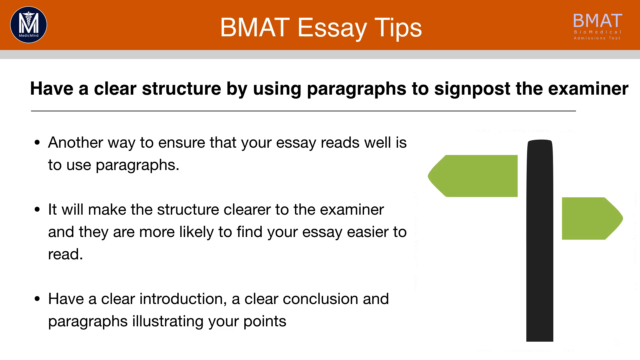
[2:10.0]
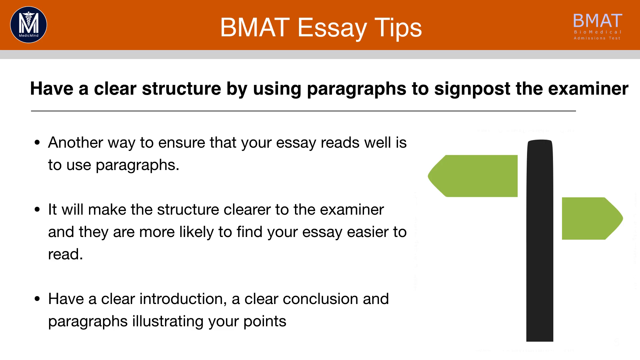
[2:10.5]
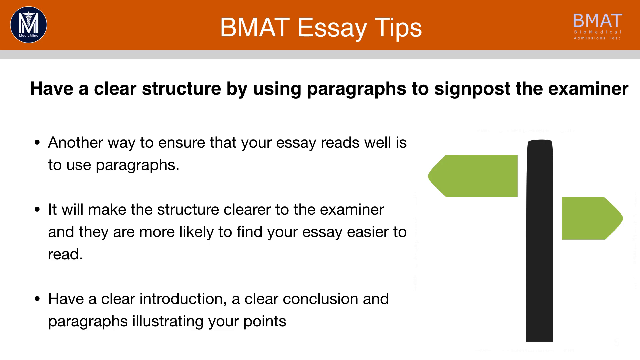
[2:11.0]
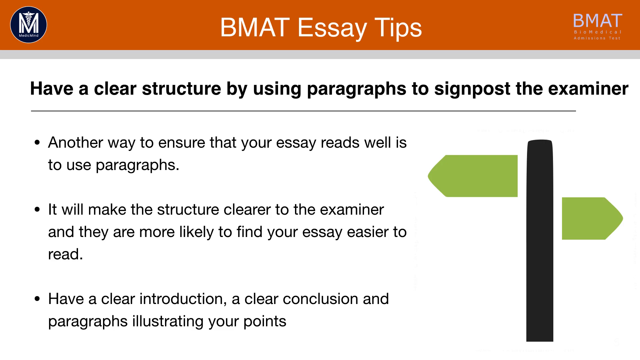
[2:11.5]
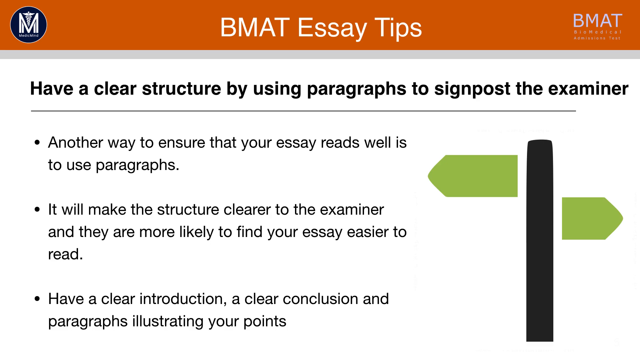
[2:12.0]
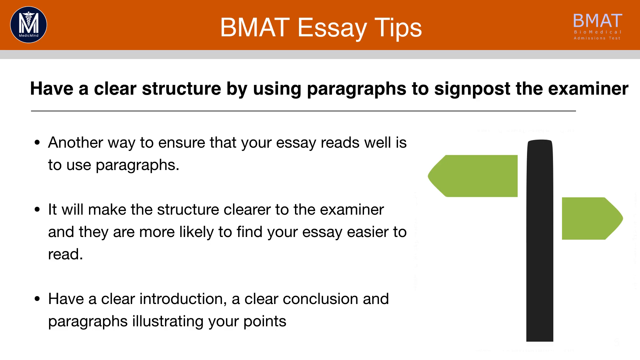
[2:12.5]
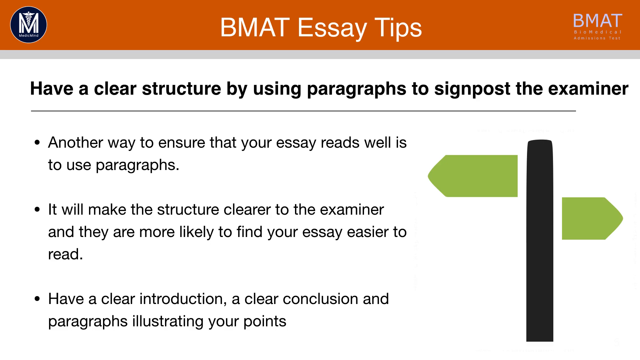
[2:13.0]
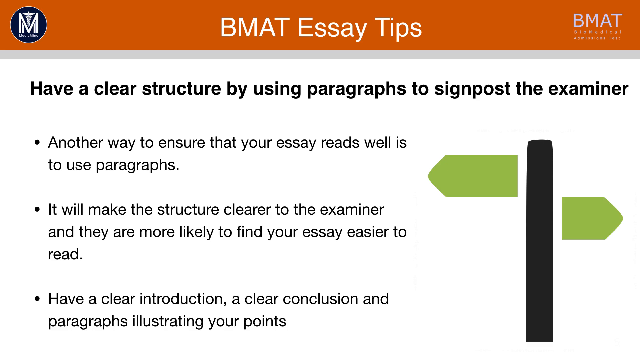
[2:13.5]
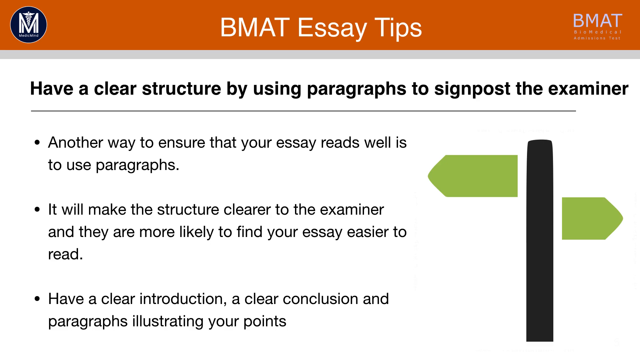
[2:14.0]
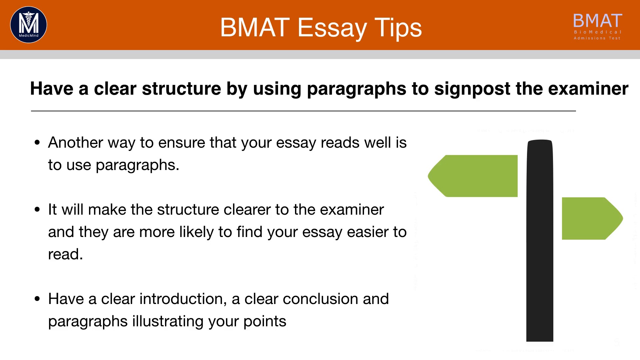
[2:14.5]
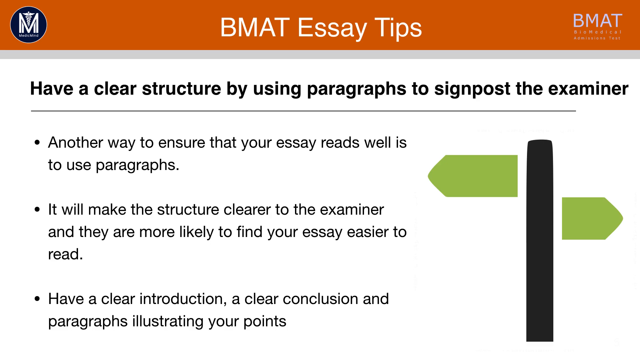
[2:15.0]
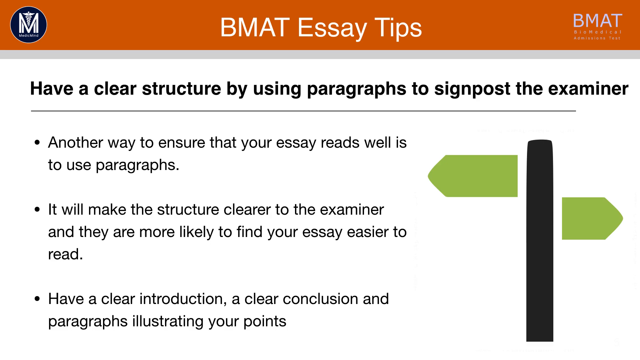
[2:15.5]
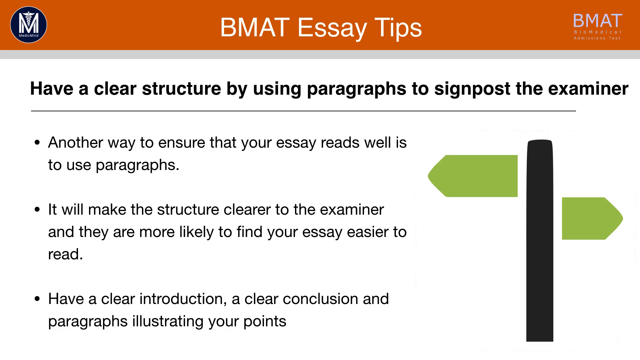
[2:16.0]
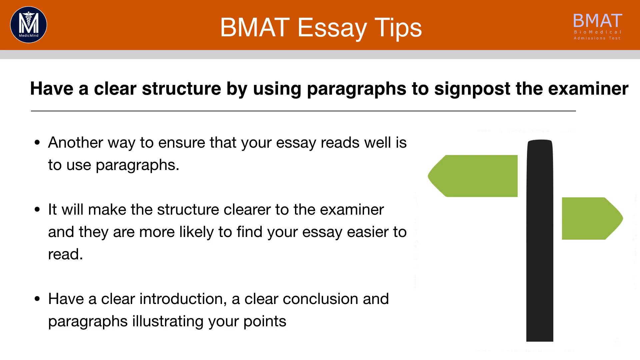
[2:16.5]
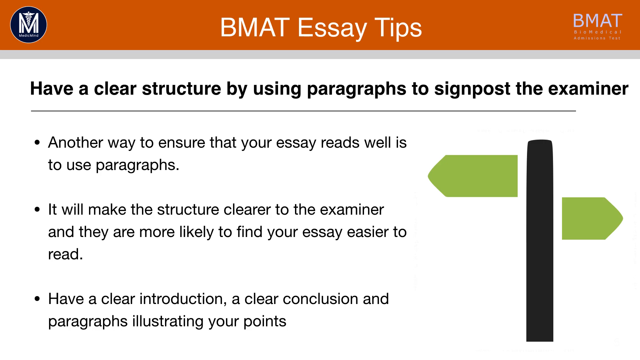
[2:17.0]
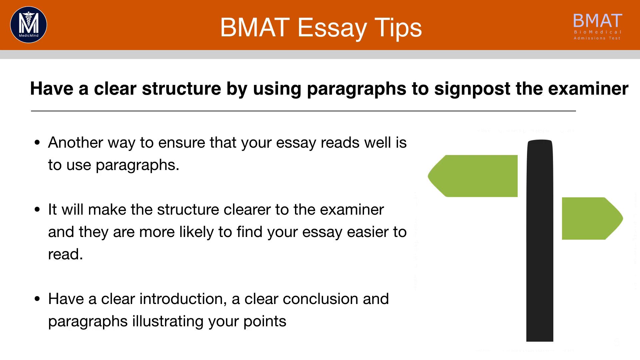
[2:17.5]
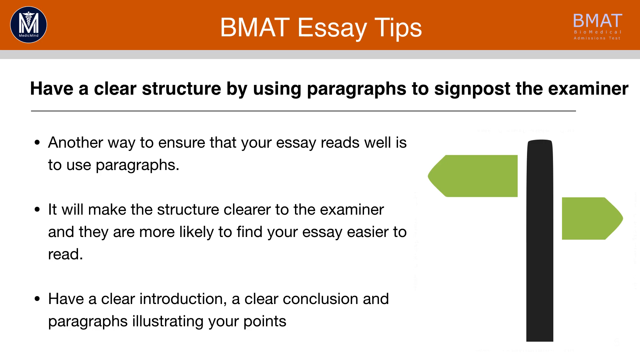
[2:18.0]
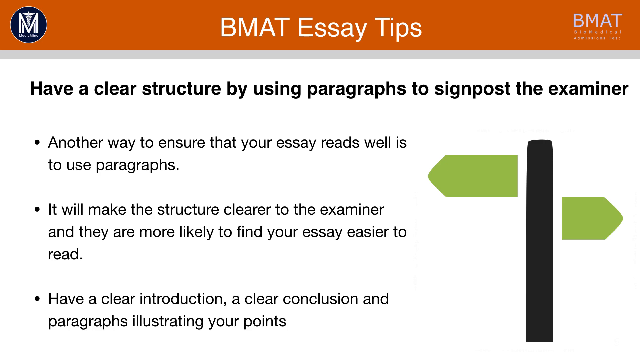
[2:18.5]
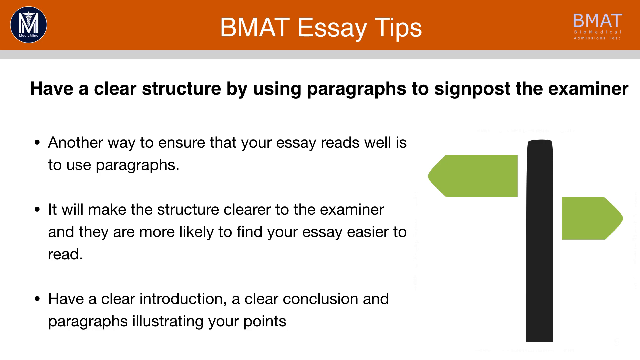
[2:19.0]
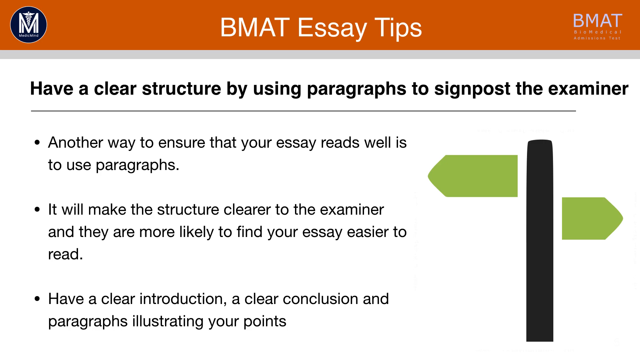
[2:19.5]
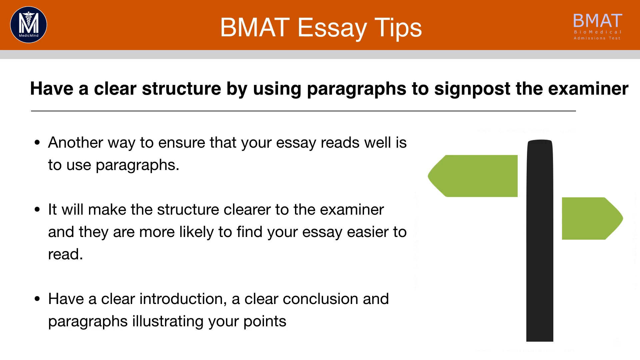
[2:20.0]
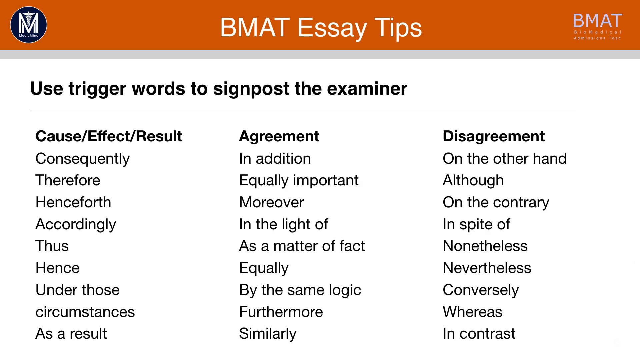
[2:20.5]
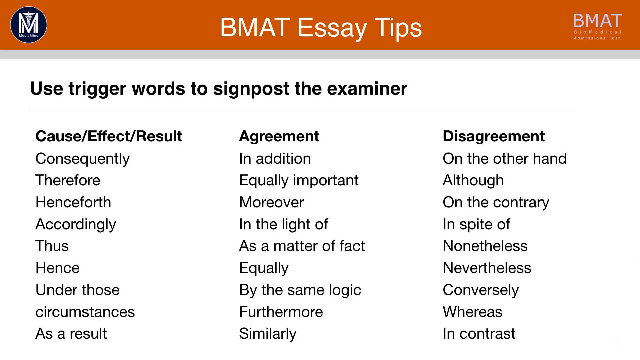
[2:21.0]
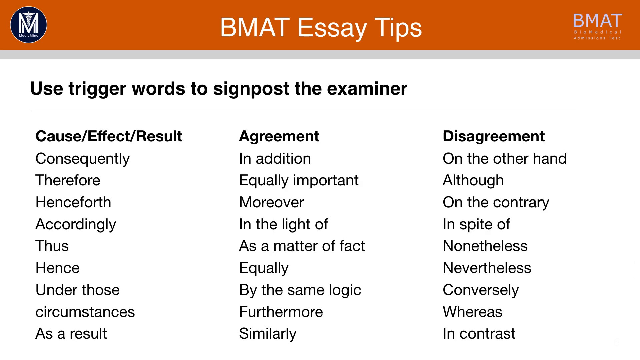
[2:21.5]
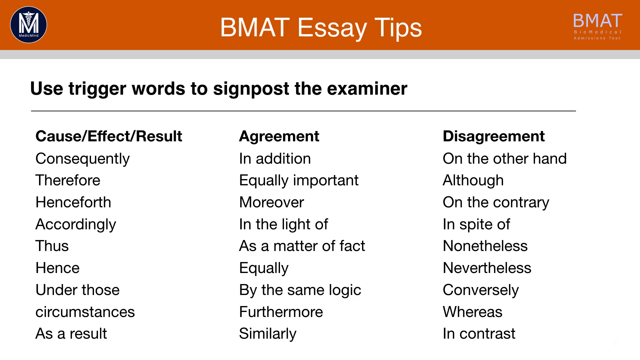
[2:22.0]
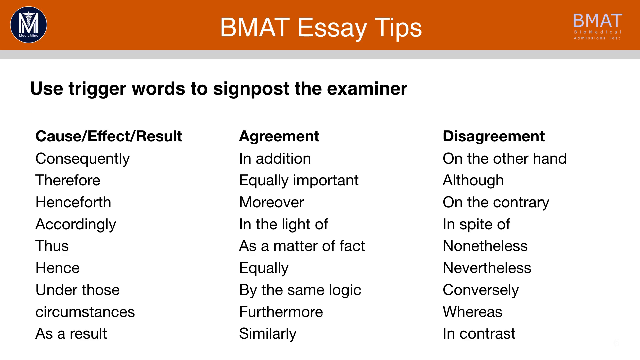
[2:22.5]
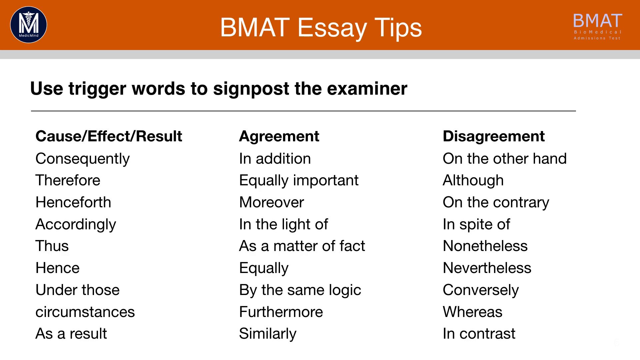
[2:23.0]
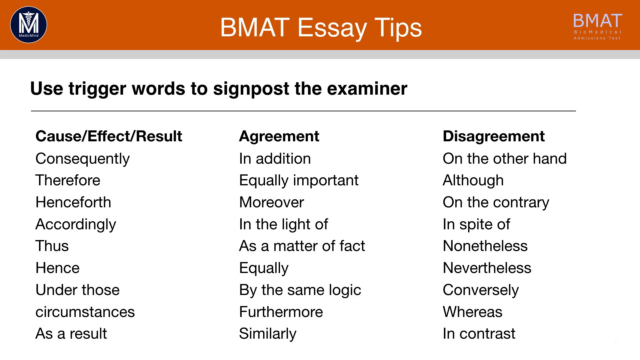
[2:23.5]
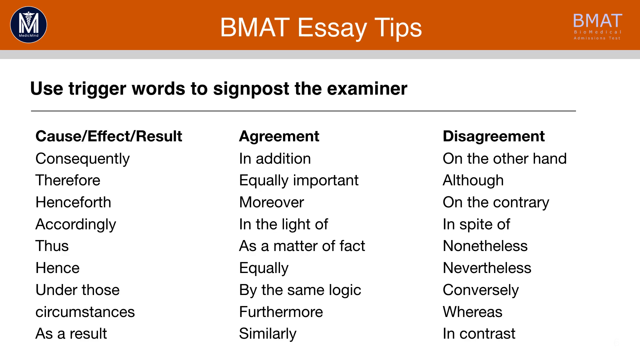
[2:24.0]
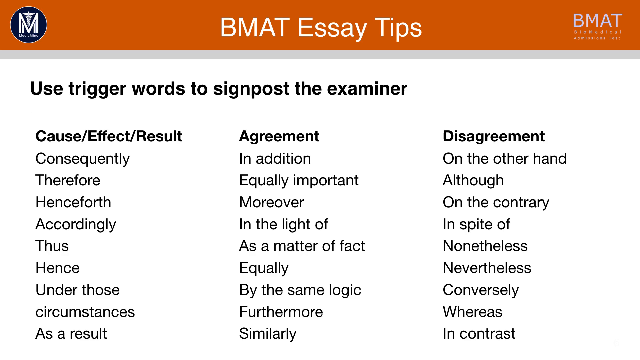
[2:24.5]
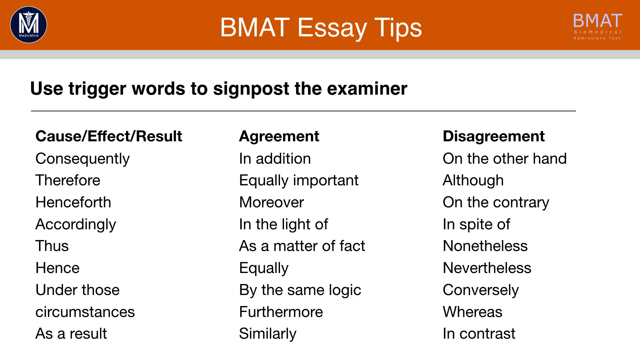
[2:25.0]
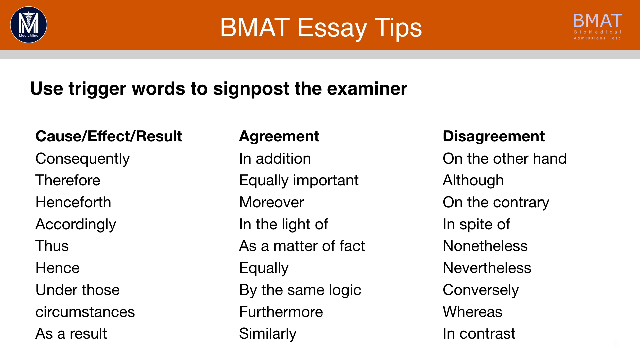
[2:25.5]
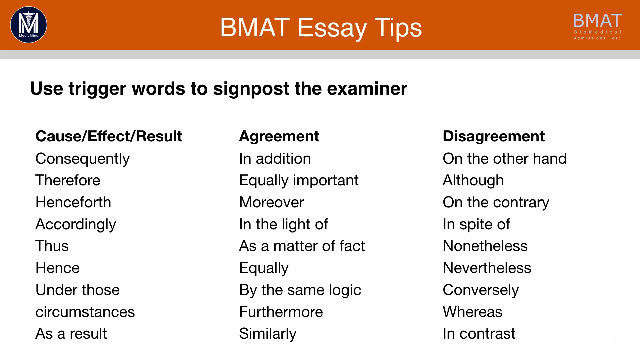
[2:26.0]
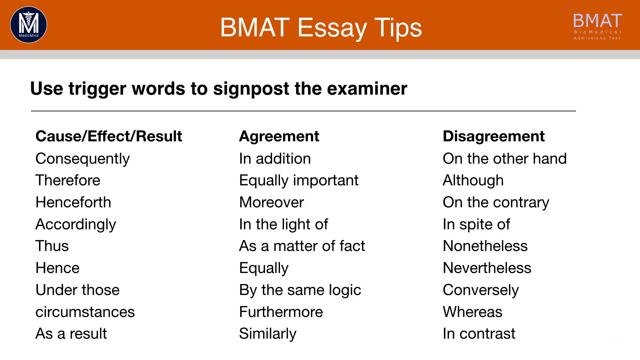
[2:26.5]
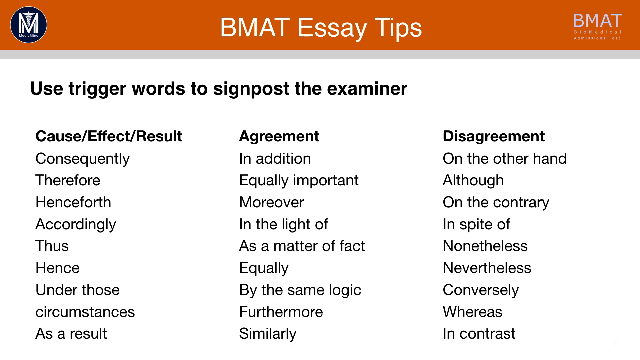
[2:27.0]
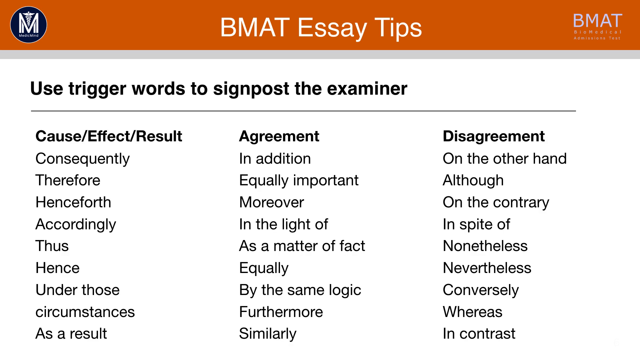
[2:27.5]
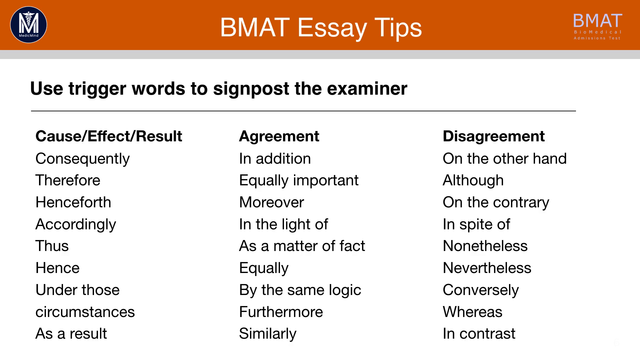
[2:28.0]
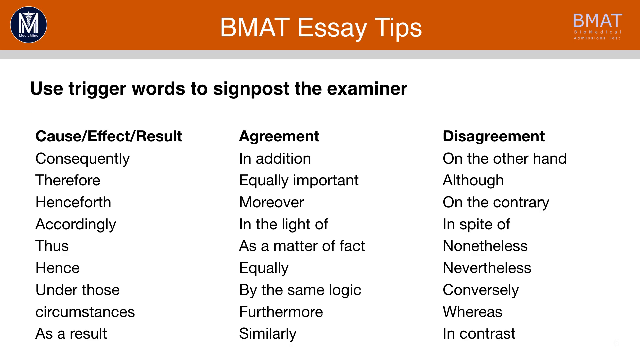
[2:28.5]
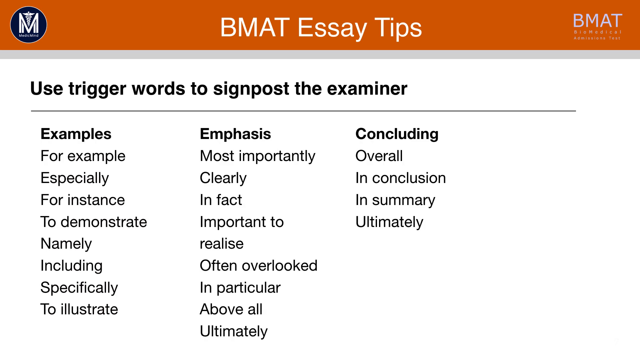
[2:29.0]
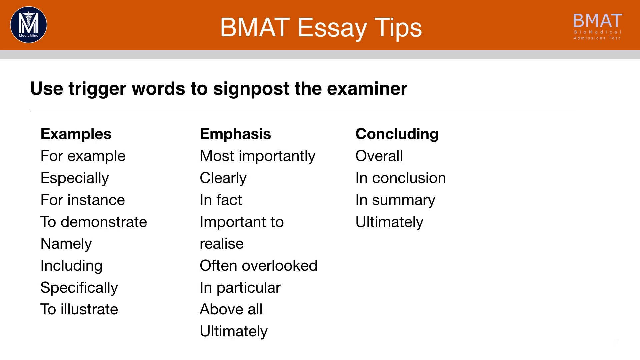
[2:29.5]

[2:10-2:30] The page shows the orange overlay, the white and blue logo at the top left, the BMAT logo at the top right, and black text reading "have a clear structure by using paragraphs to signpost examiner", with three bullet points of information and the signpost logo with the large rectangle and two green shapes pointing off it. It then transitions to a new slide, again with the orange overlay at the top and the logos on each side, with black text below reading "use trigger words to signpost the examiner". Three highlighted words at the top include cause, effect and result, agreement and disagreement, and under each of these sections are different words that go with them. This stays on screen, and then new words appear, including examples, emphasis and concluding, with examples underneath each.